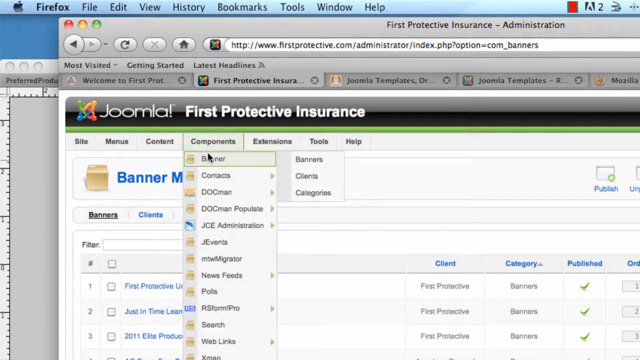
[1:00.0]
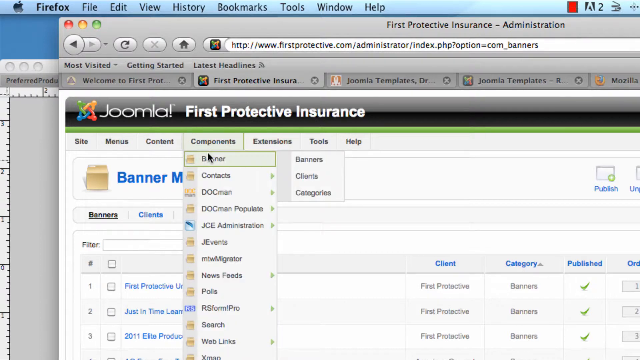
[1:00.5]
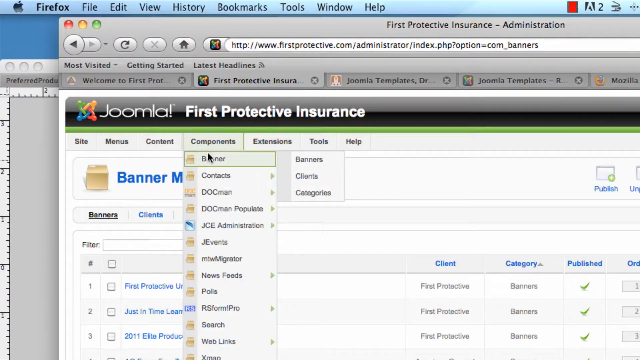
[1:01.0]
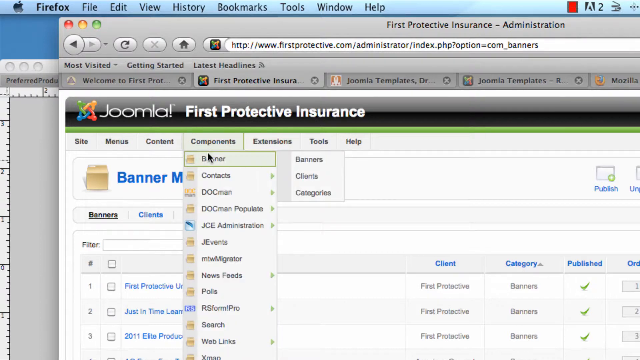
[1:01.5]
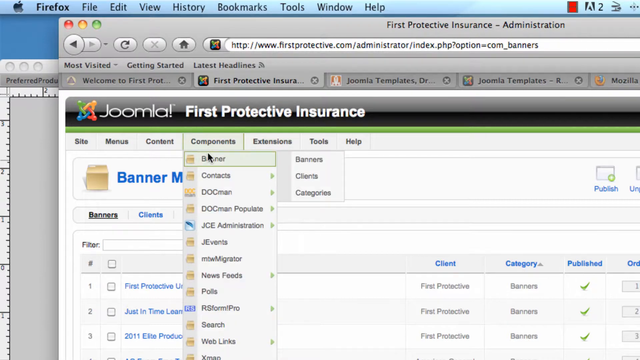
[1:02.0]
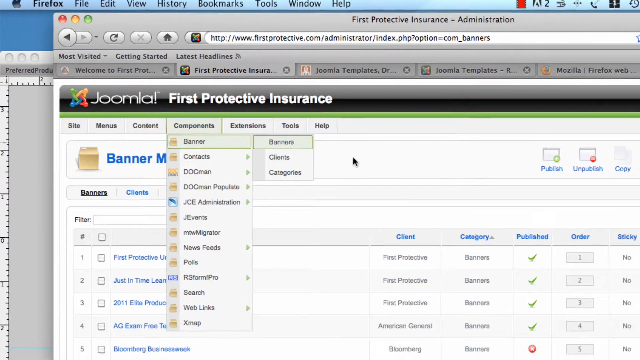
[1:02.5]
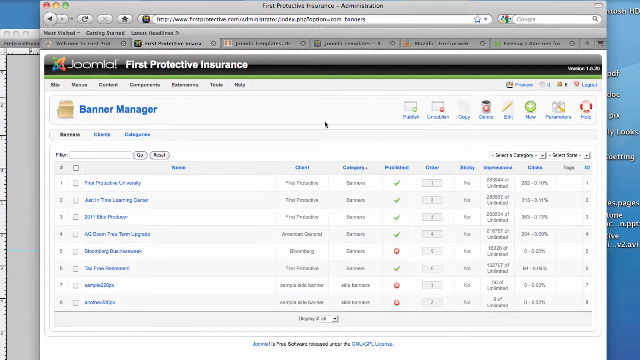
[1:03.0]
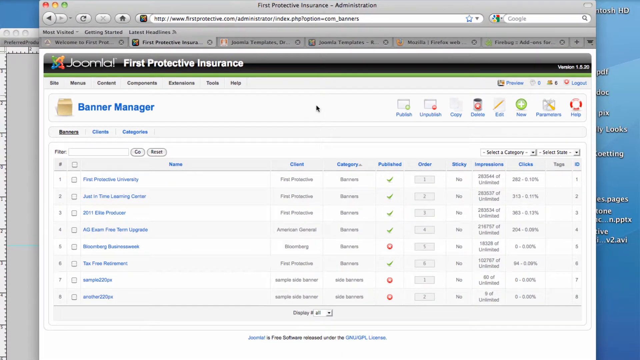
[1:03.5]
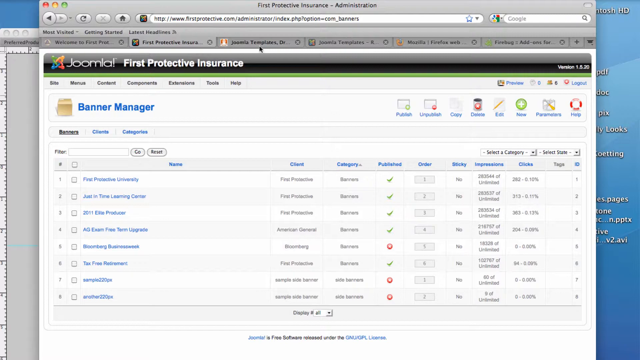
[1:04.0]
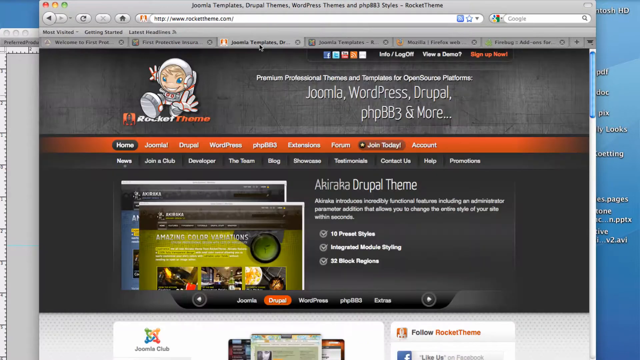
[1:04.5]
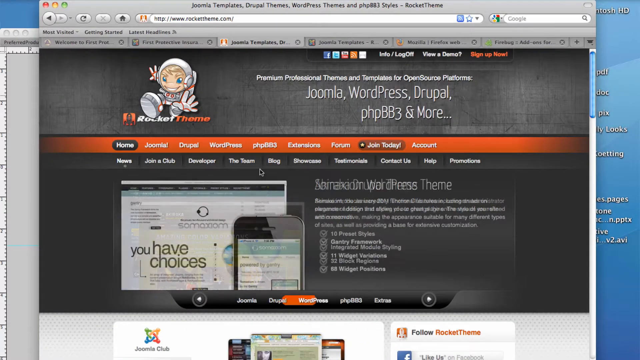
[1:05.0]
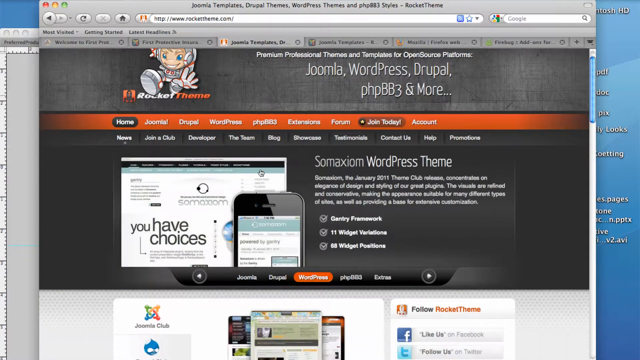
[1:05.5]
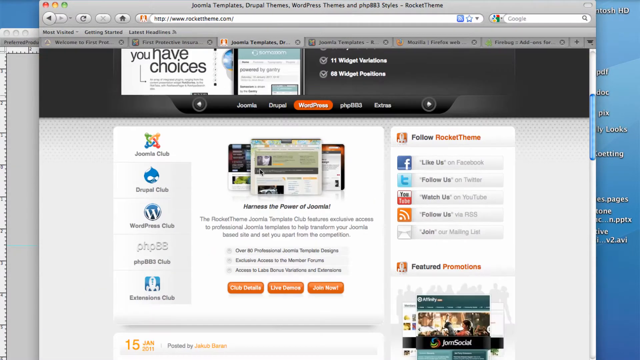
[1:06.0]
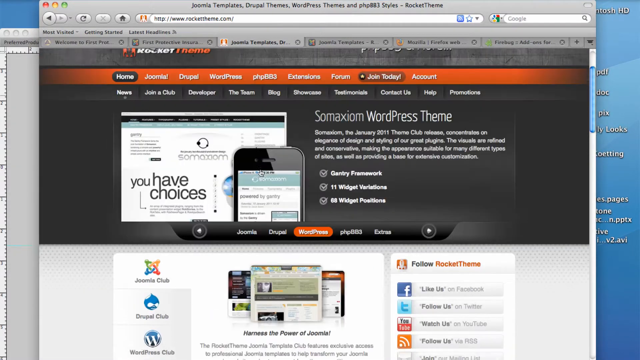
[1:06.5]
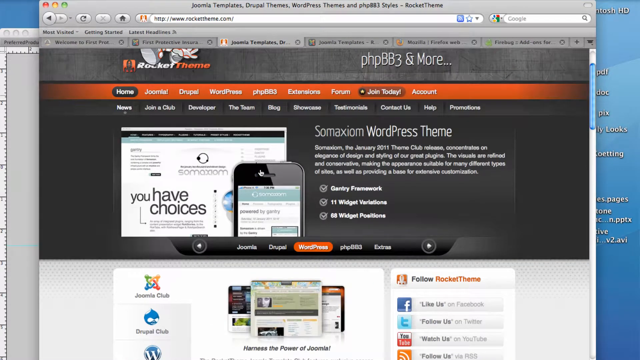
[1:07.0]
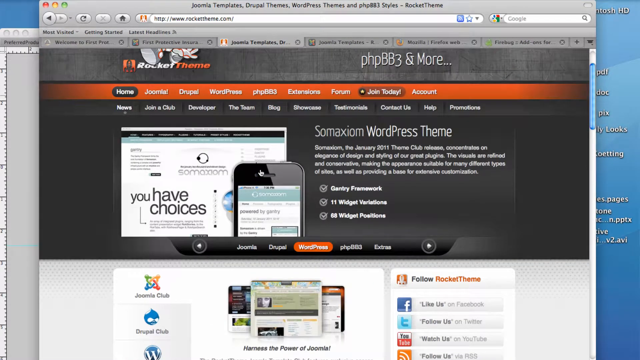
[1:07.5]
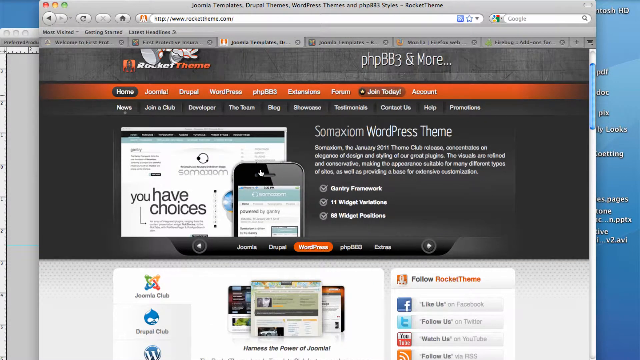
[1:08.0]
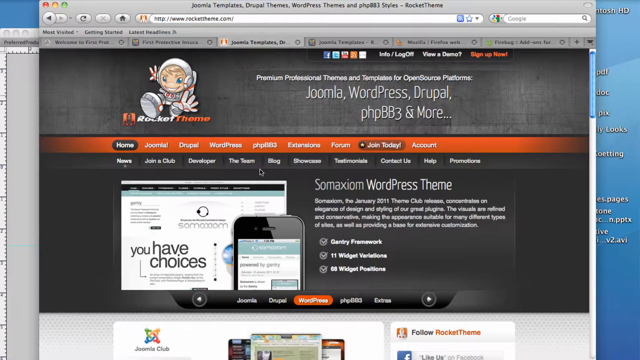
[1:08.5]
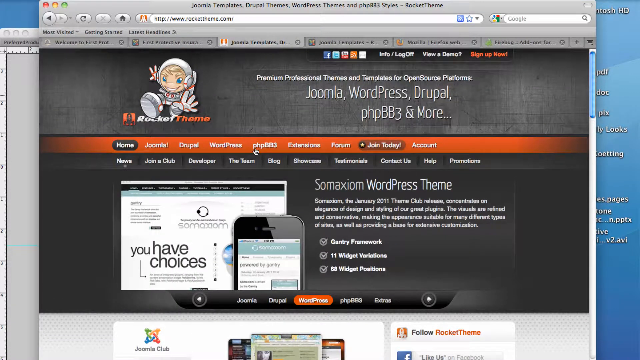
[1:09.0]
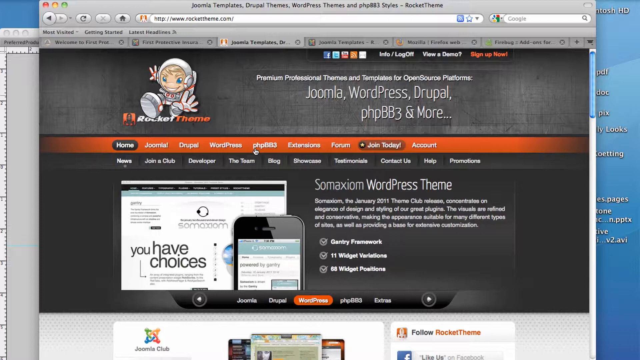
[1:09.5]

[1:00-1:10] A folder manager is shown, with the mouse cursor highlighting banner. The page at the top says "First Protective Insurance Administration," and the URL is "firstprotective.com/administrator/index.php?option=com_banners." The menu bar says "Most Visited, Getting Started, Latest Headlines." One tab says "Welcome to First," the next says "First Protective Insurance," the next says "Joomla Templates," and beneath that is "Joomla First Protective Insurance." The person zooms out to show the whole browser window, then moves the cursor to the "Joomla templates" tab. That page shows a cartoon of an astronaut with the words "rocket theme," and next to it the text "premium professional themes and templates for open source platforms," with "Joomla, WordPress, Drupal, PHP, BB3, and more" beneath it. Right beneath that text is an orange banner with tabs reading "Home, Joomla, Dupla, WordPress, PHP, BB3, Extensions, Forum, Join Today, and Account."